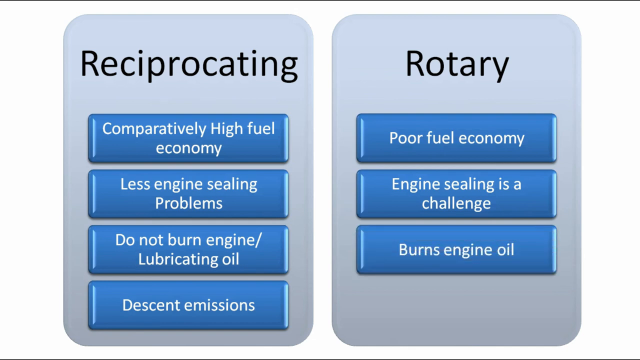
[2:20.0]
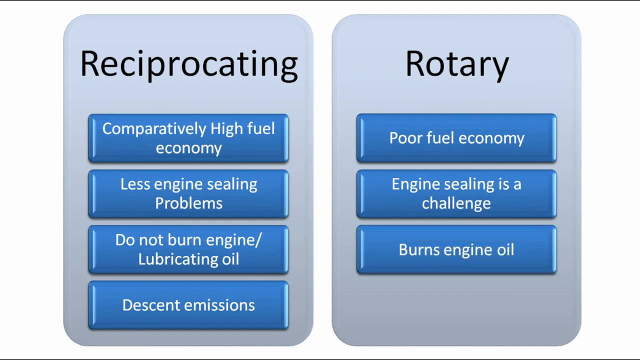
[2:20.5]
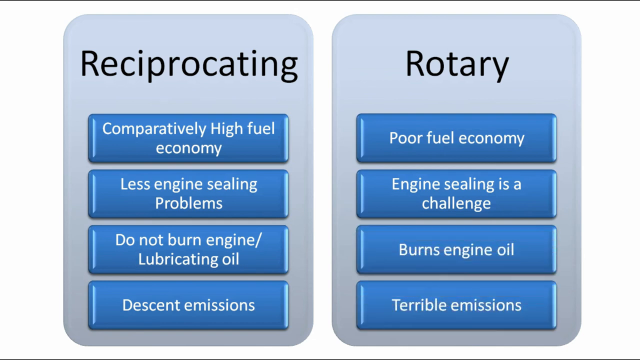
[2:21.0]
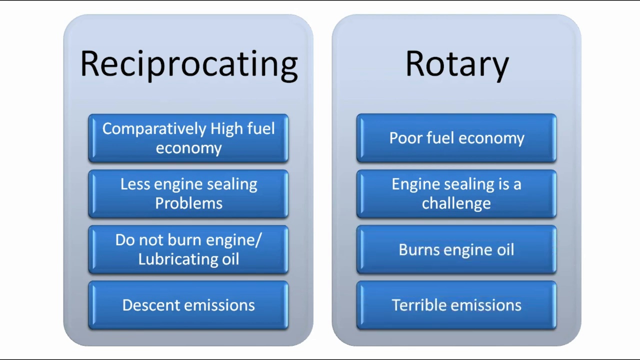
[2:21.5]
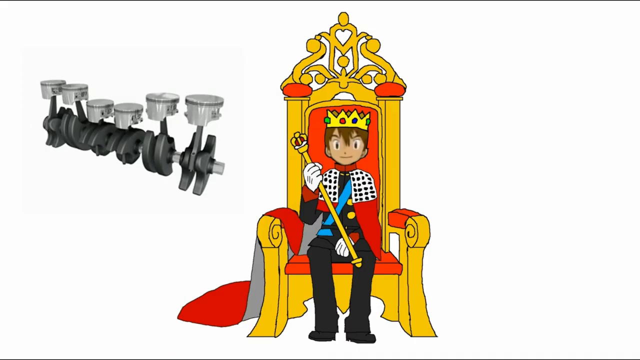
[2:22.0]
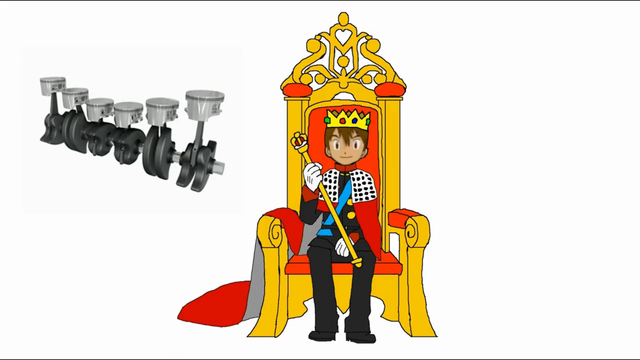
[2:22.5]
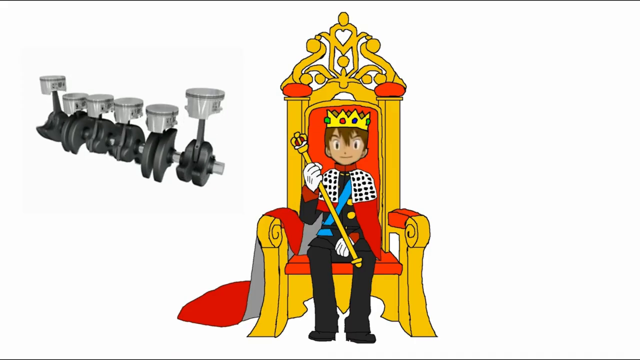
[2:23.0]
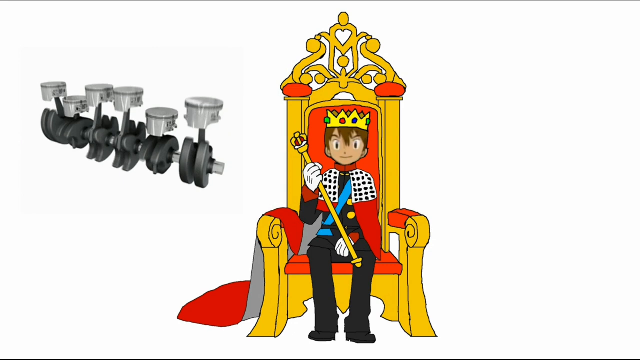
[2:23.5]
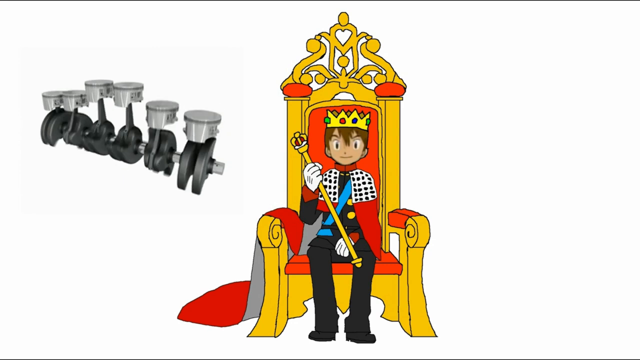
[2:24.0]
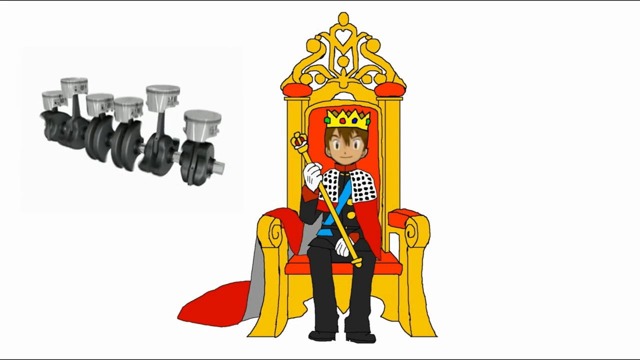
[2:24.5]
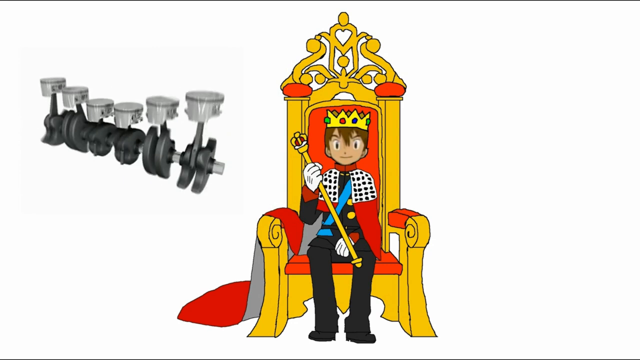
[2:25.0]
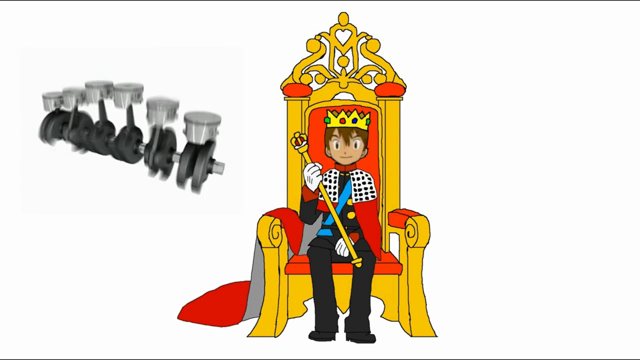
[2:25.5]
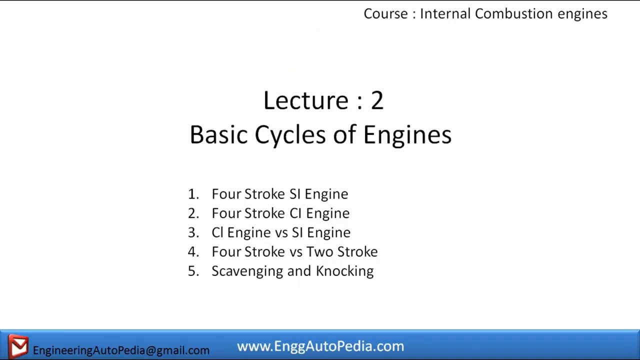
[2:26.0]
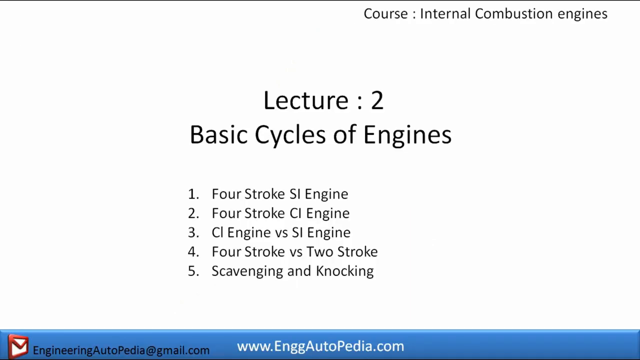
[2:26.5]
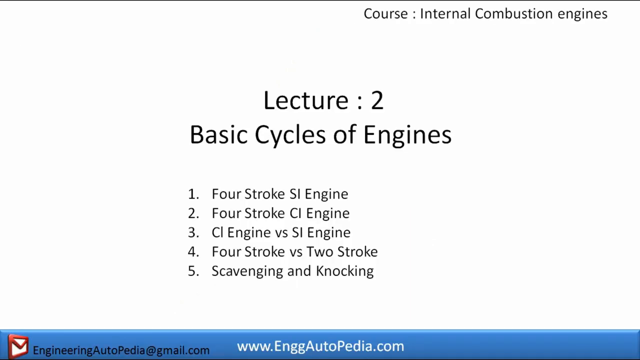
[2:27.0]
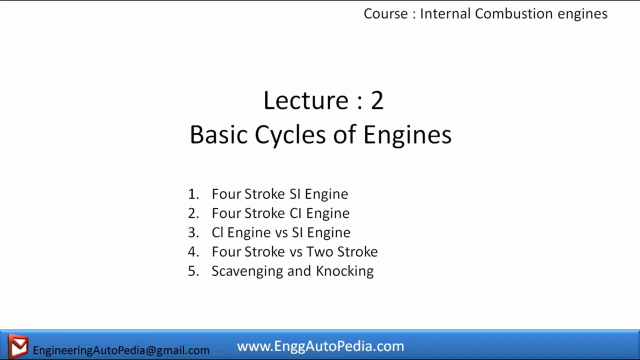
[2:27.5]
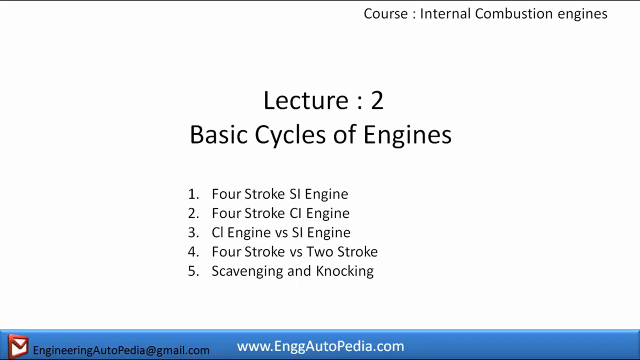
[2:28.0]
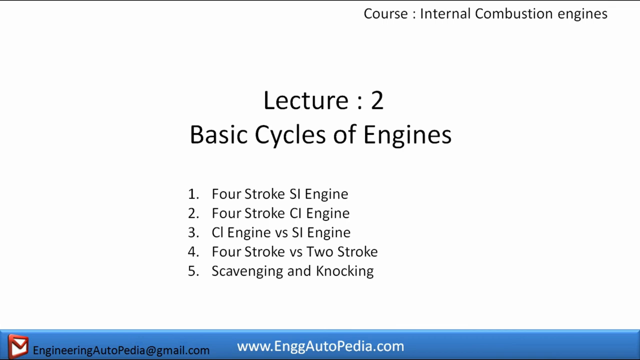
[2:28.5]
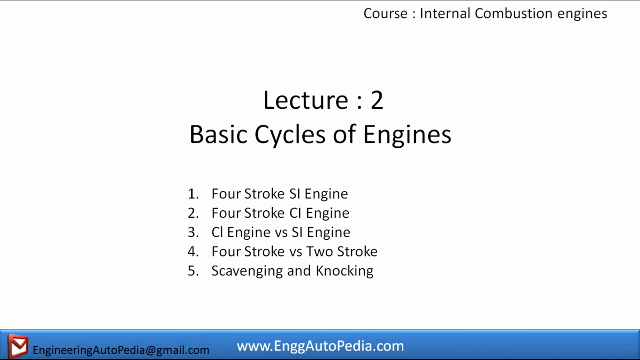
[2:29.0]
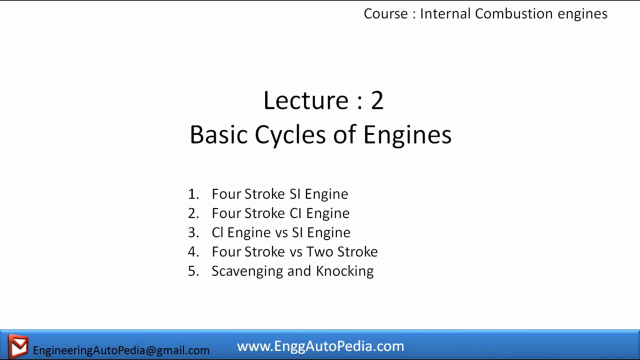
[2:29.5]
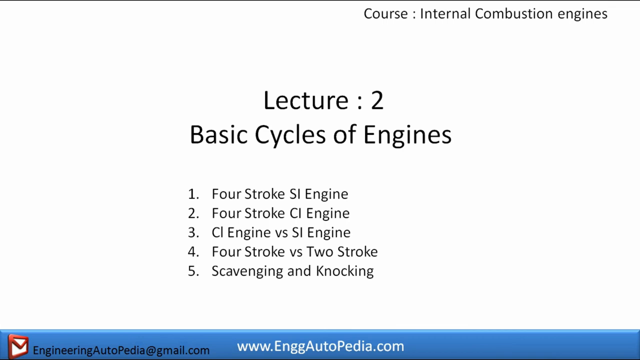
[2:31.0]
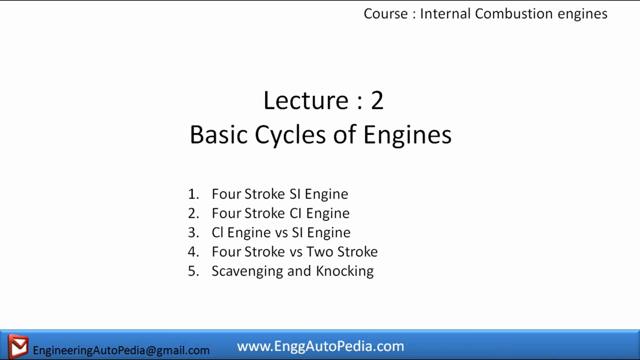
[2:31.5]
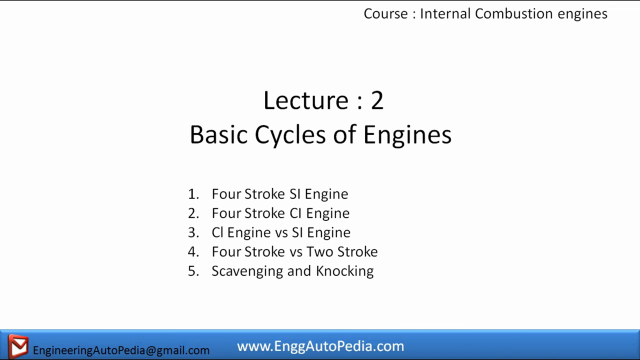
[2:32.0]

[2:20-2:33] The video appears to be a PowerPoint presentation. On the left is a light blue rectangle with black text inside at the top reading "reciprocating," and four blue rectangles below it with white text reading "comparatively high fuel economy," "less engine sealing problems," "do not burn engine / lubricating oil," "decent emissions." On the right is another light blue rectangle with black text at the top reading "rotary," and three blue rectangles below it with white text reading "poor fuel economy," "engine sealing is a challenge," "burns engine oil." A fourth rectangle appears reading "terrible emissions." Then what looks like an animation appears of a man sitting on a golden throne, holding a golden cane in his right hand and wearing a crown, a red cape and a black suit underneath. On the left side is what looks like a GIF or animated picture of what appear to be pistons going up and down. The video then transitions to a slide with a white background reading, in black text at the top middle, "lecture two, basic cycles of engines," with five lines below it: "one, four stroke SI engine," "two, four stroke CI engine," "three, CI engine versus SI engine," "four, four stroke versus two stroke," "five, scavenging and knocking." At the top right, black text reads "course, internal combustion engines."